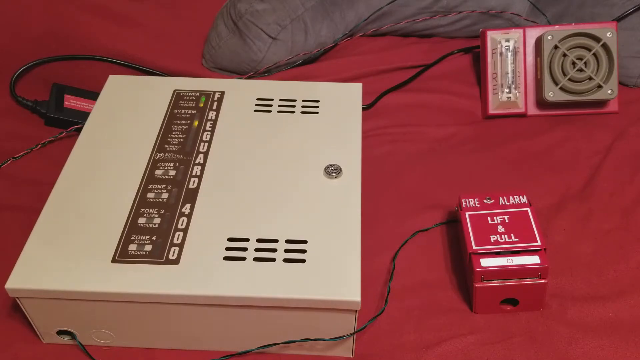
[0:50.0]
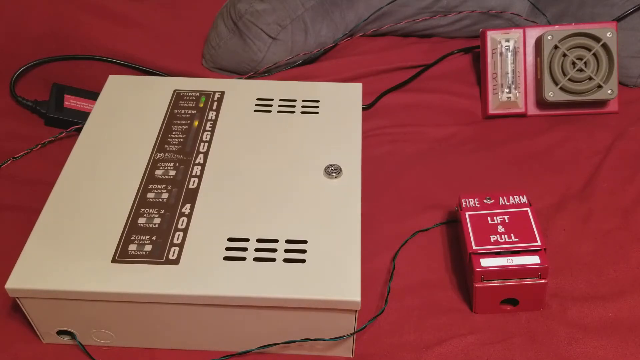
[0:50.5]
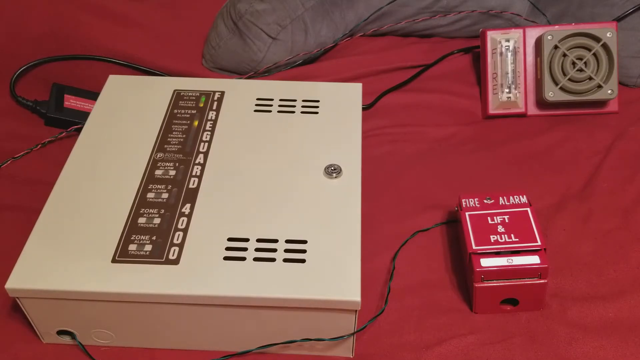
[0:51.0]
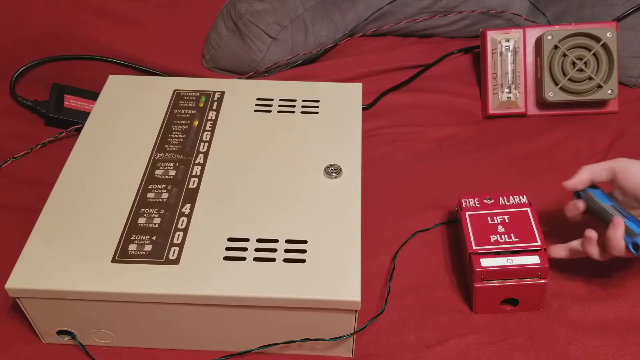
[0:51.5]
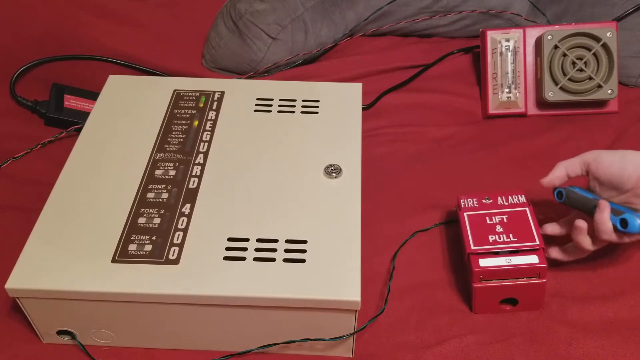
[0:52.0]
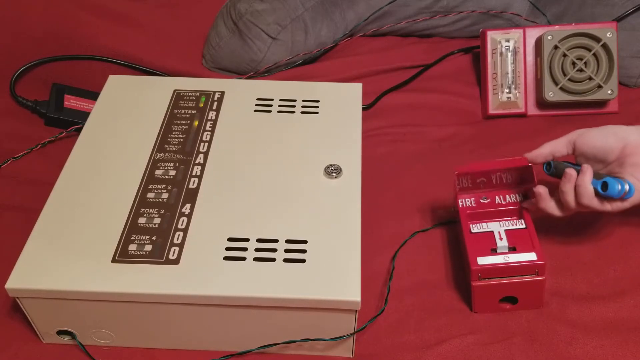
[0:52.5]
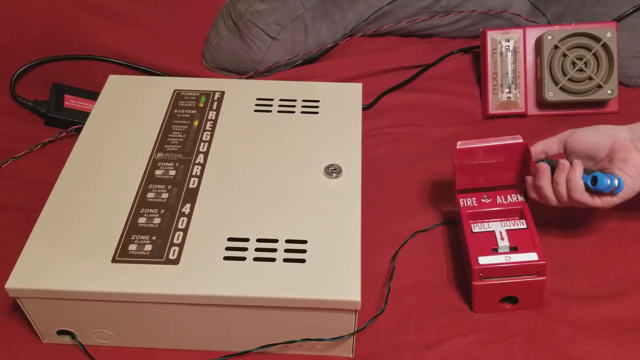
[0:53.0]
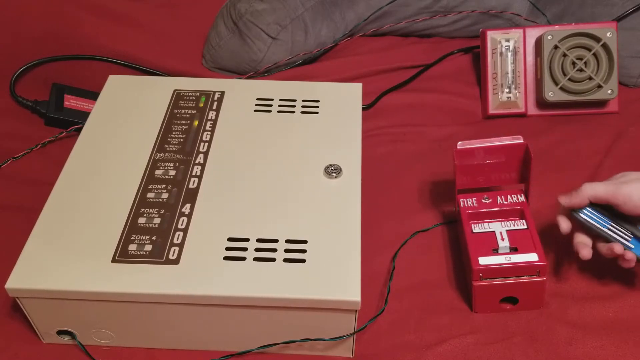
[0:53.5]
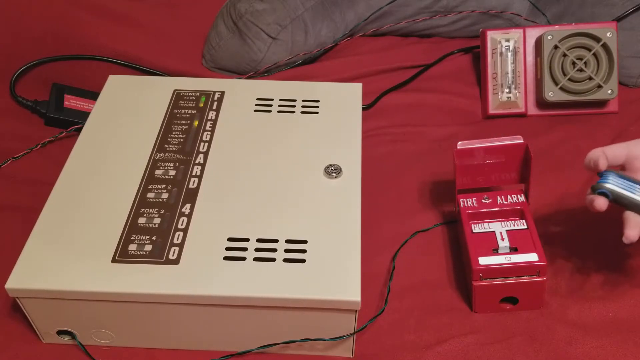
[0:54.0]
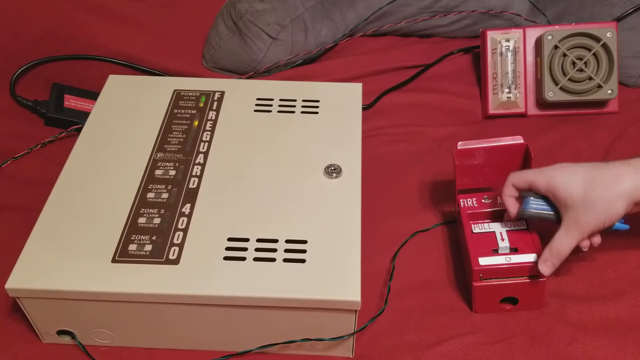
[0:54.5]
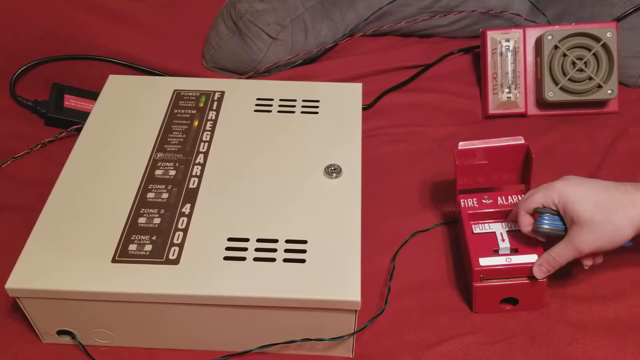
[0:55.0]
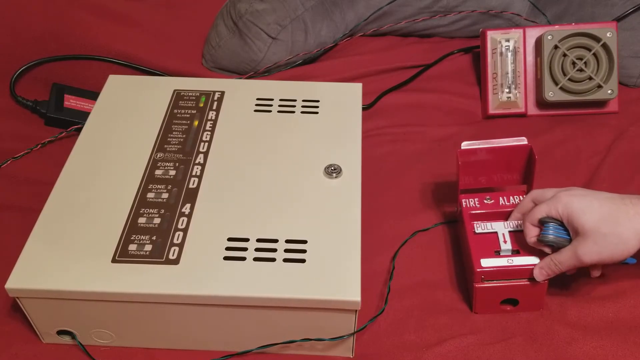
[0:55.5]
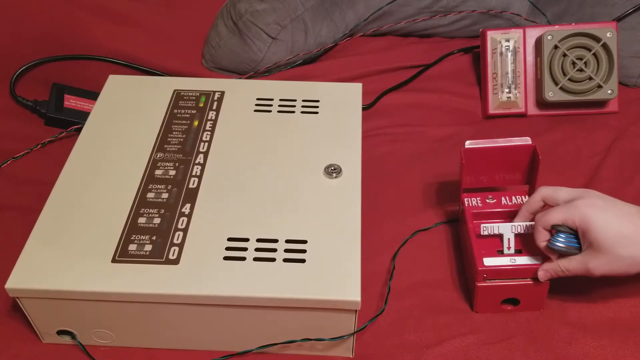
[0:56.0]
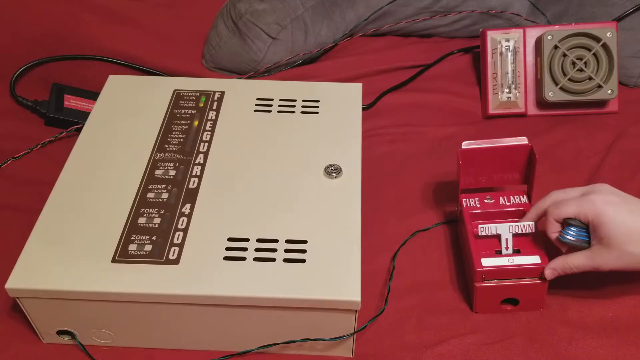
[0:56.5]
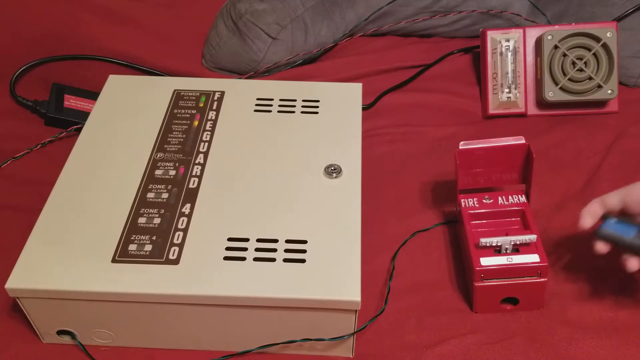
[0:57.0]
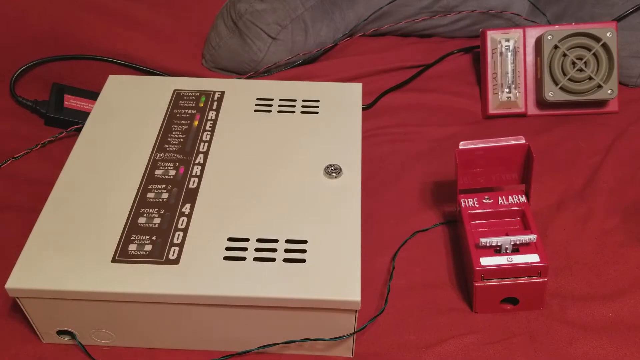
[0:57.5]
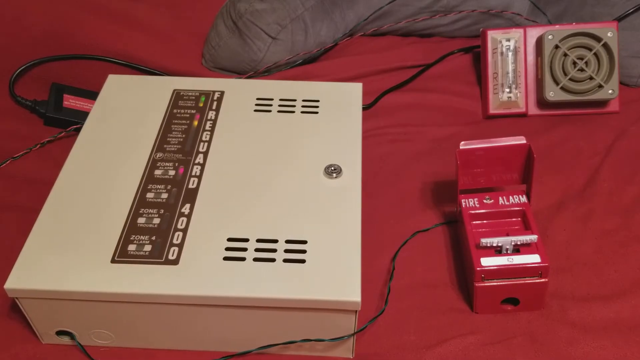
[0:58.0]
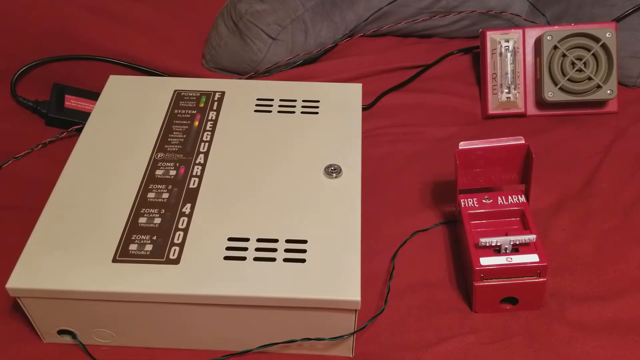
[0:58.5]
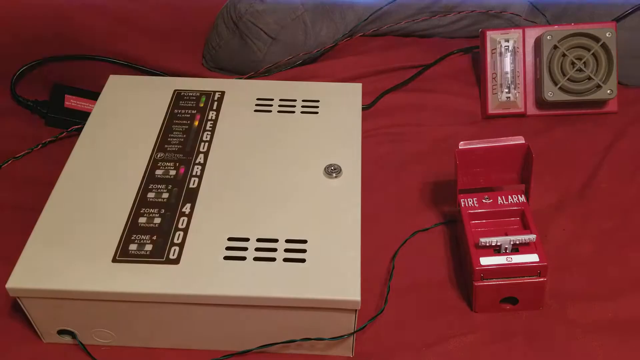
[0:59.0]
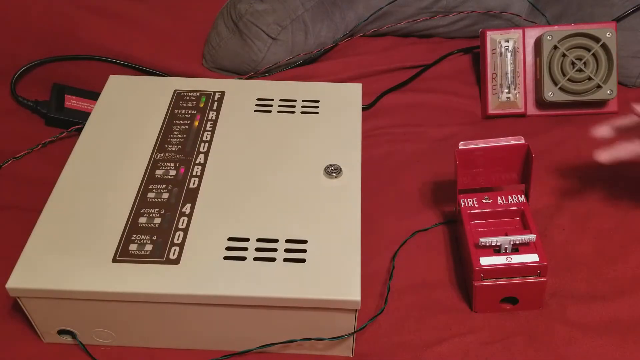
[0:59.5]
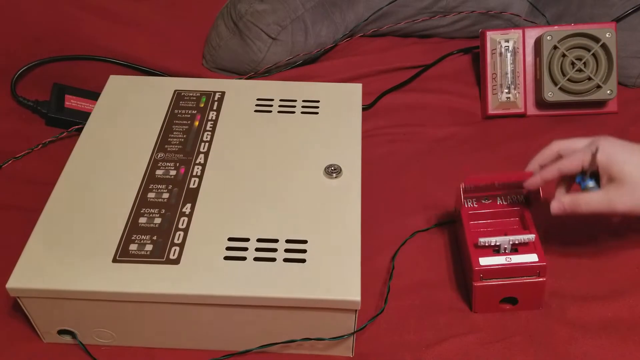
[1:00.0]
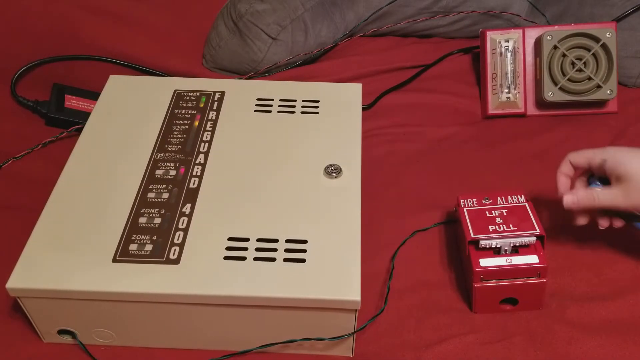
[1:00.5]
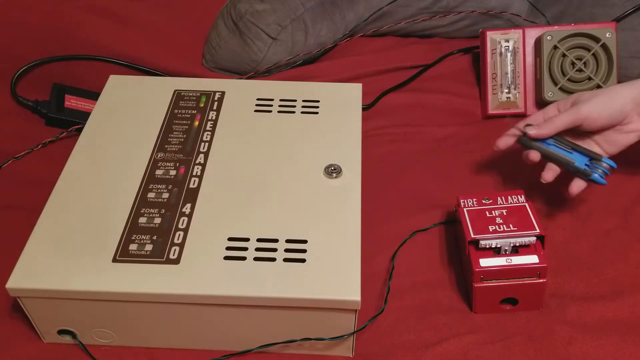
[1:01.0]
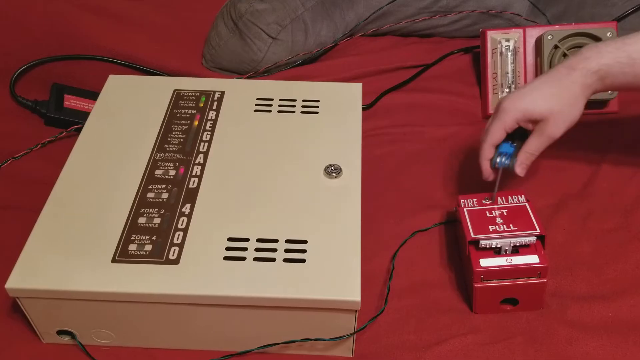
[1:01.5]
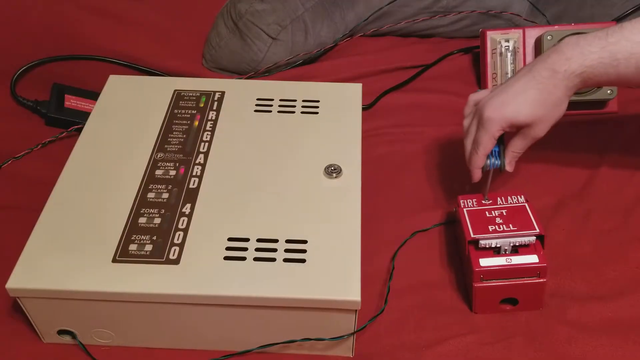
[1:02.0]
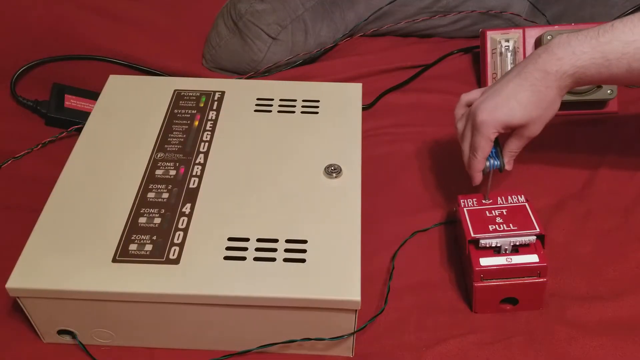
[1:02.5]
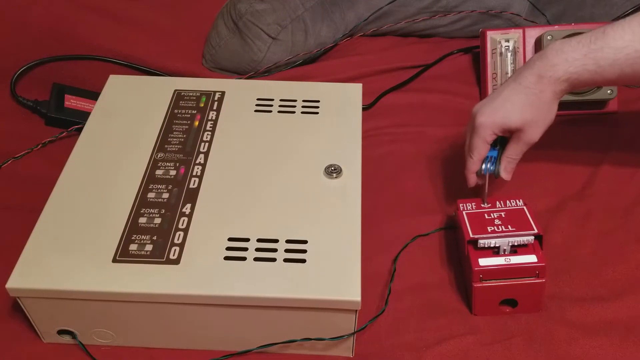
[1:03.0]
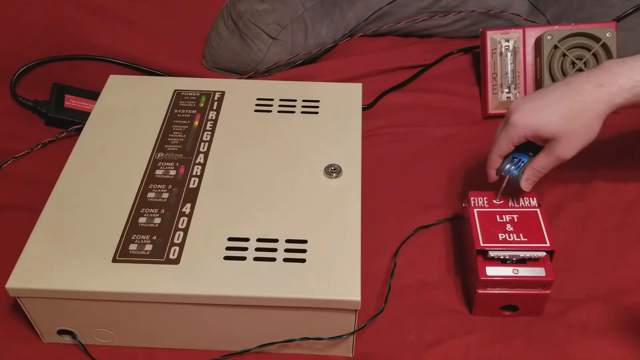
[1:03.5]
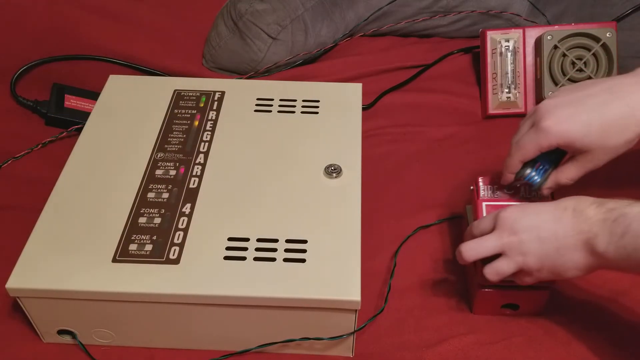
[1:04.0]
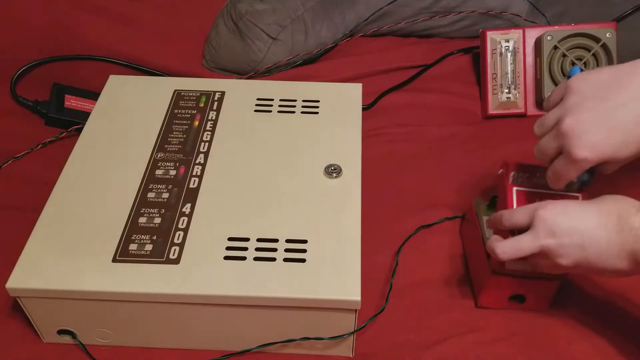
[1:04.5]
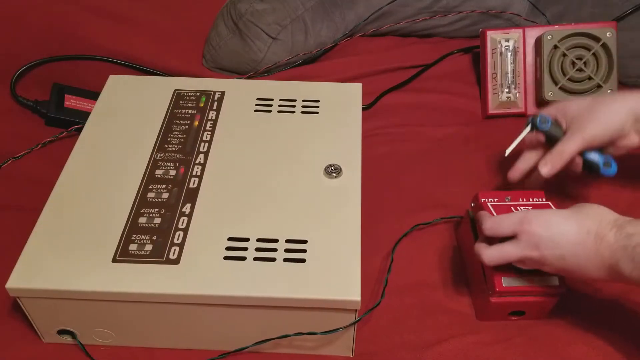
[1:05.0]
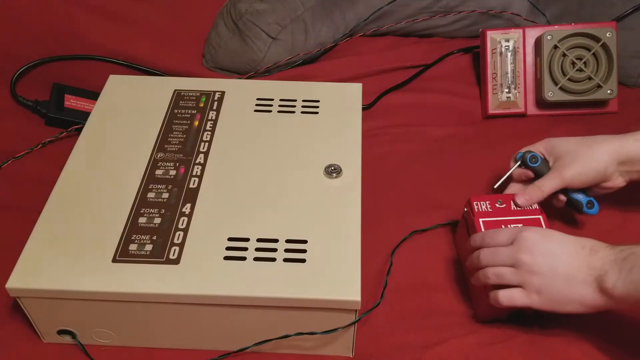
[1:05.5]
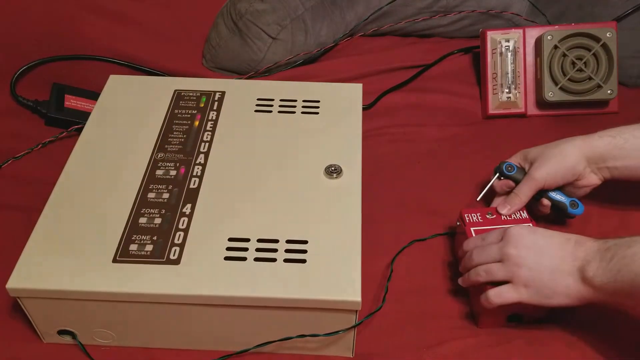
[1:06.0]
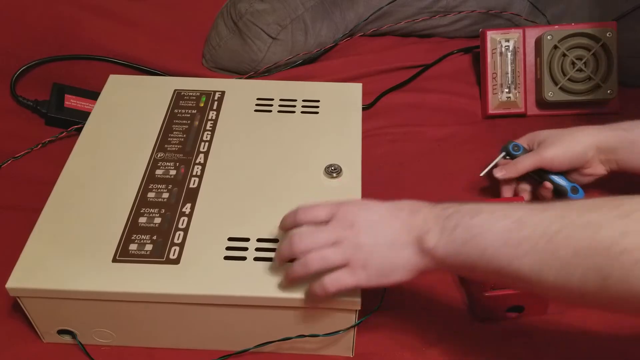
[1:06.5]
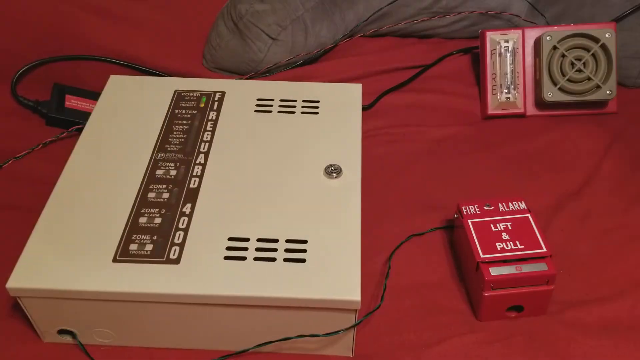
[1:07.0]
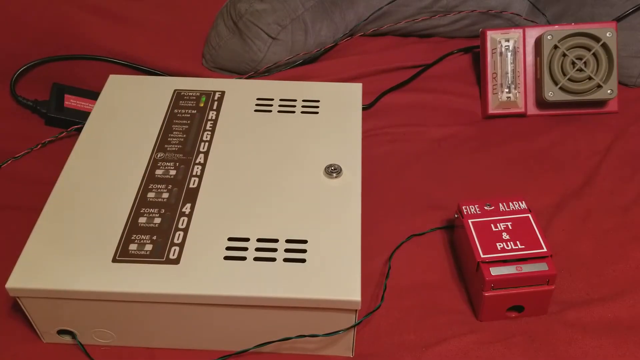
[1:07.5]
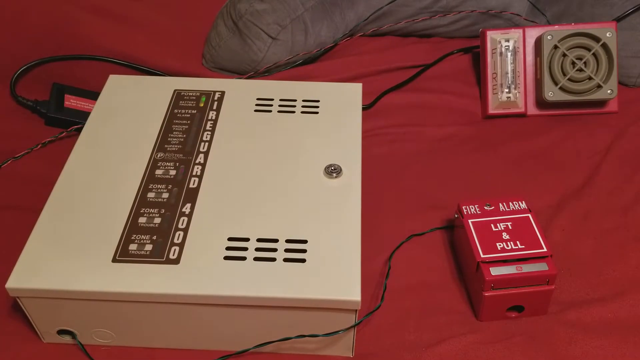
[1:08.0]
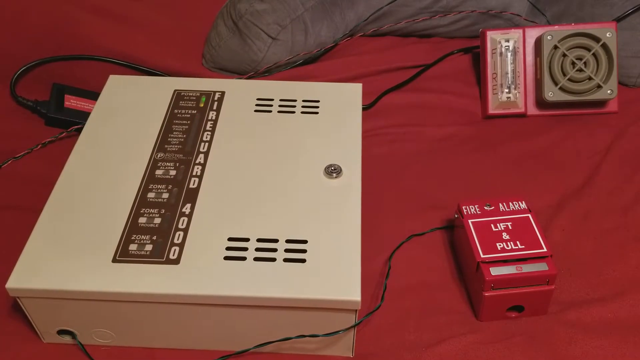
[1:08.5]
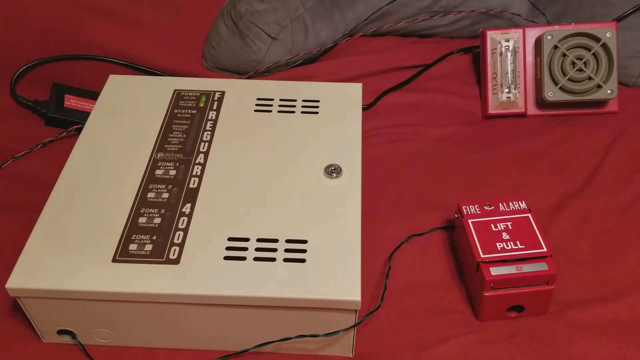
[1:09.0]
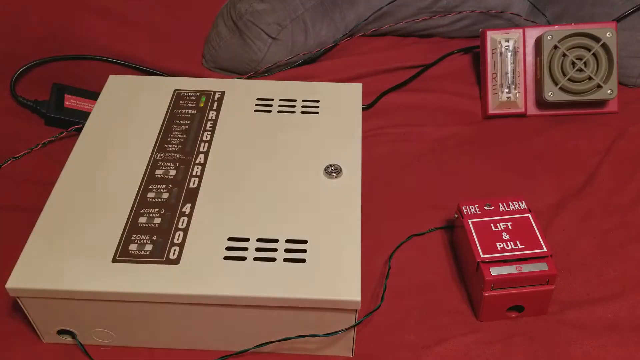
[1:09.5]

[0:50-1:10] The hand with the multi-tool re-enters the frame and lifts up the cover on the lift and pull fire alarm attached to the main box, still holding the multi-tool. It lifts up and pulls down the lever hidden under the cover, then leaves the frame. The main fire alarm box now has two red lights flashing, one under the System section above the yellow light and another in a section lower down labeled "zone 1 alarm," showing the alarm has been activated. A bright white light in the background starts to flash every few seconds. The person then inserts the multi-tool into a screw on the lift and pull button before shutting it again, while the white light and the red lights on the box continue to flash.